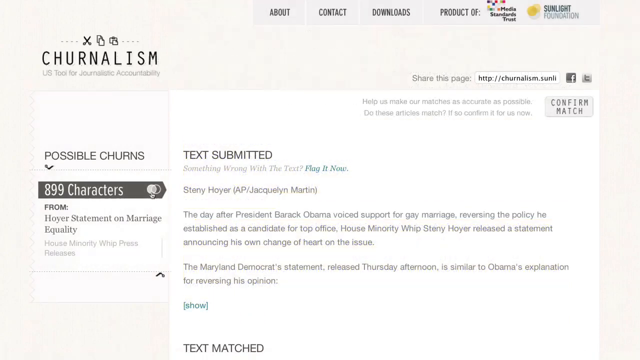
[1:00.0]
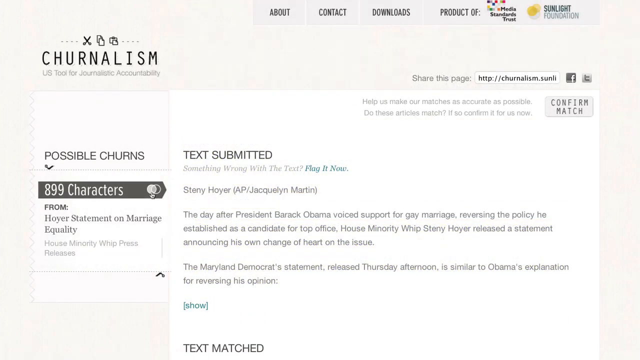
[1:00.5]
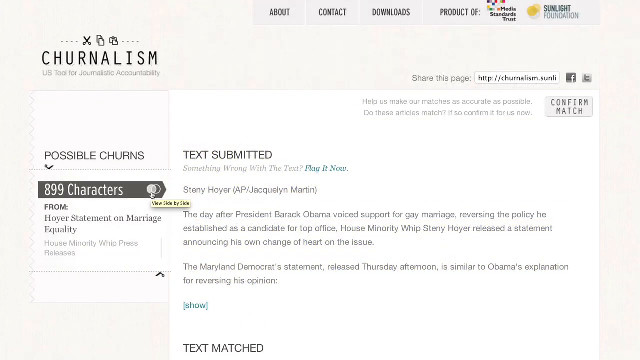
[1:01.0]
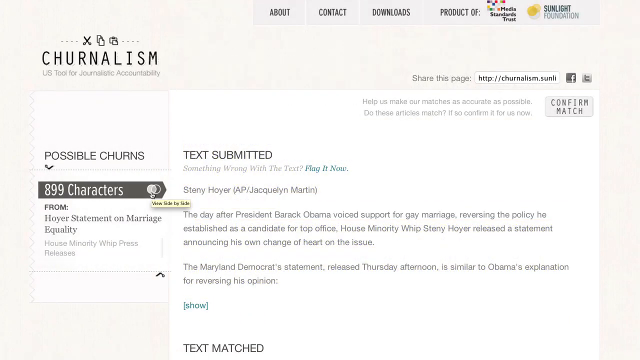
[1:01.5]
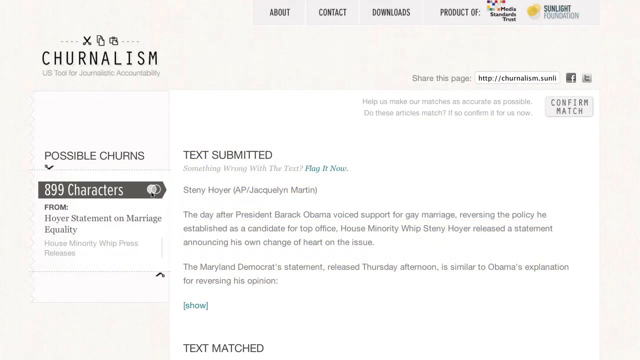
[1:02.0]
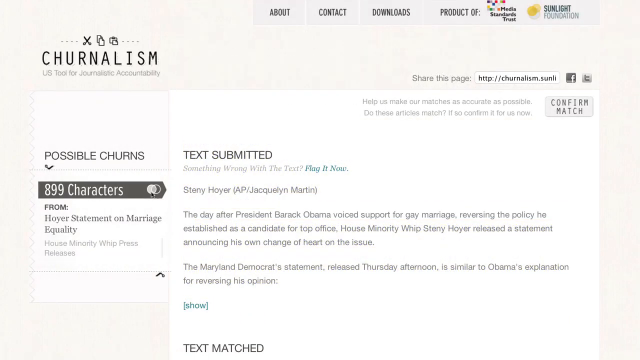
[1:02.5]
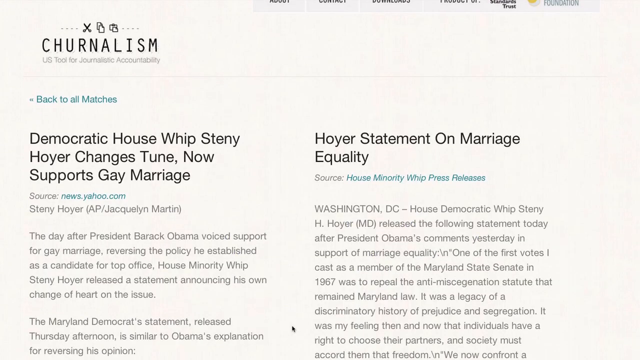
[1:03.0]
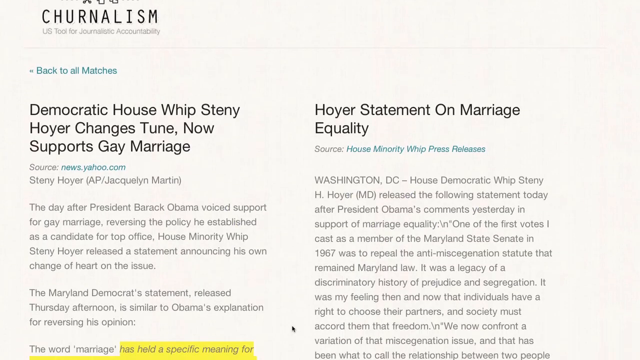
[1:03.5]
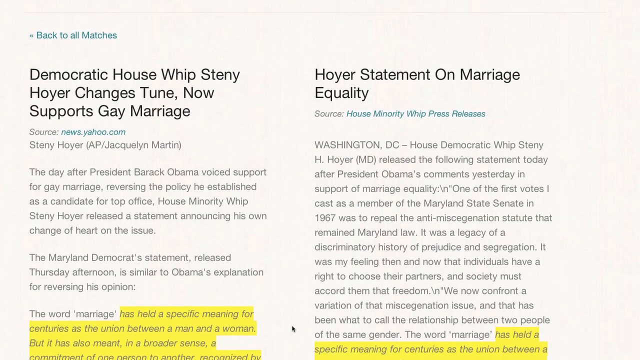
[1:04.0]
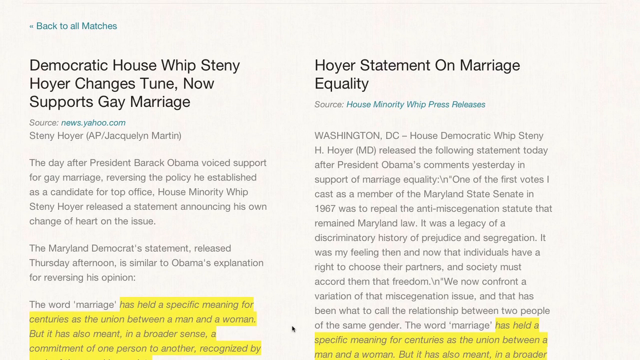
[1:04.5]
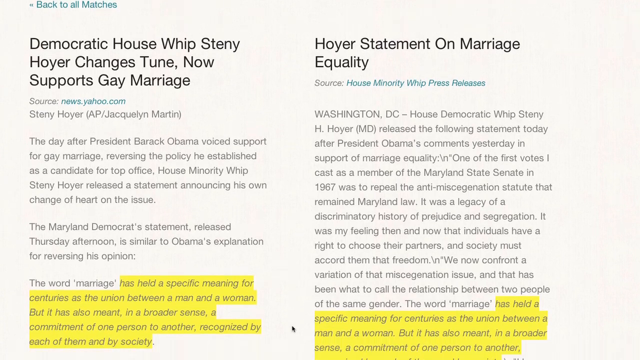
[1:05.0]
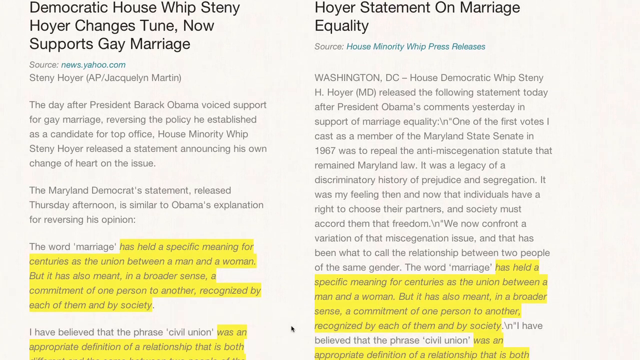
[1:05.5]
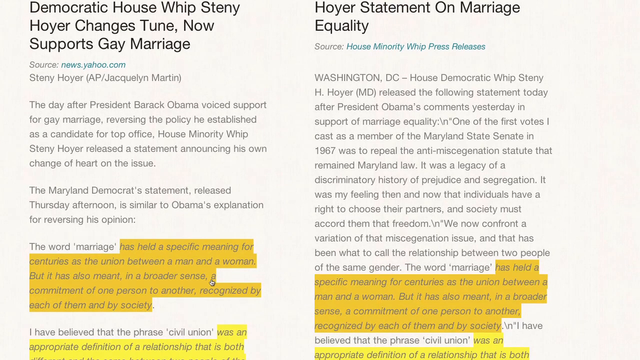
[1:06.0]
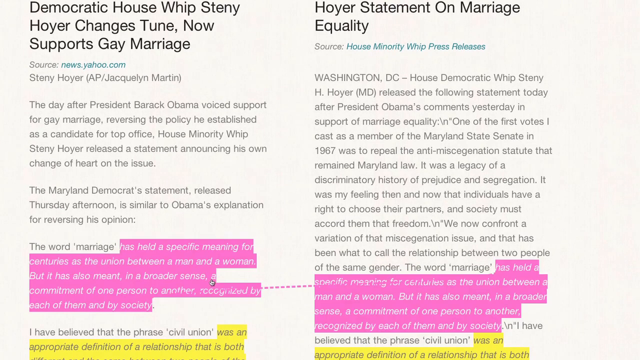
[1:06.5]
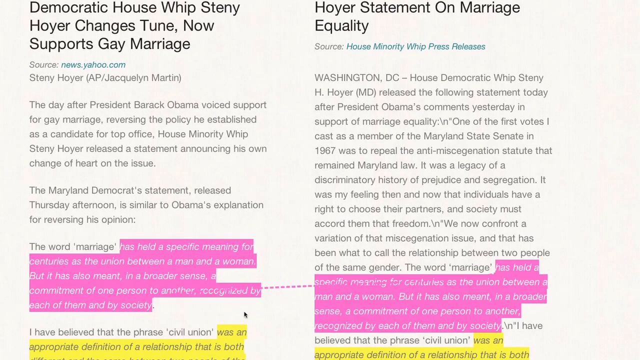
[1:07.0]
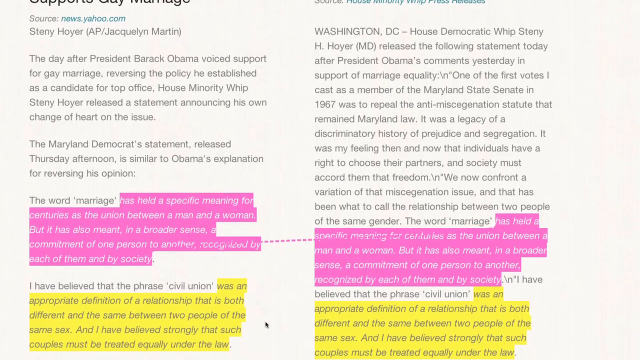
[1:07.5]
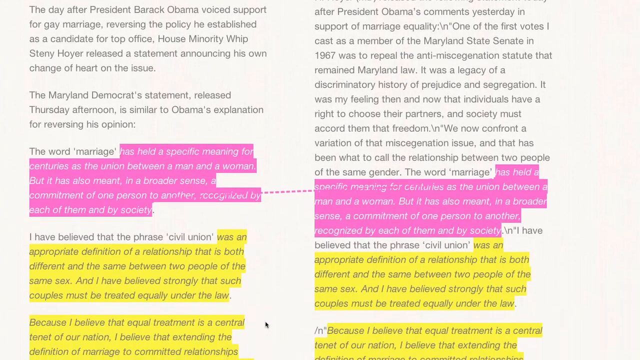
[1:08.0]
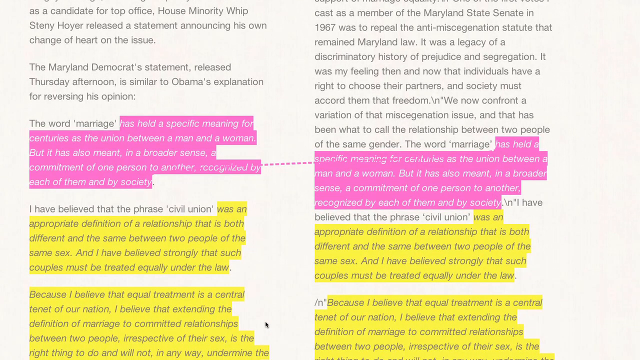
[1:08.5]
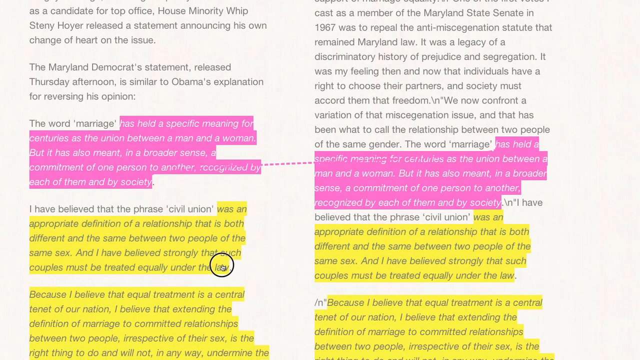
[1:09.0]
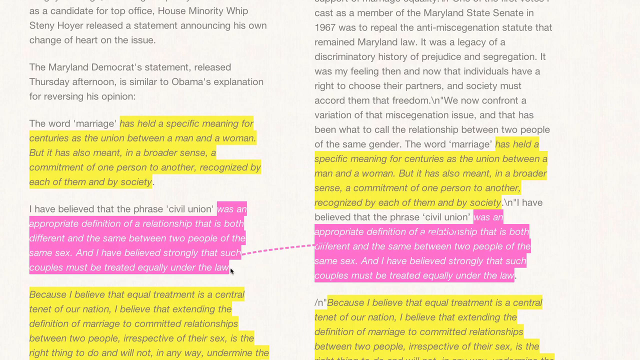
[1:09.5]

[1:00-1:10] The Journalism homepage appears. Up top is a menu bar that says "About," "Contact," "Downloads," "Product Of." There is something that says "Media" and, in small text, apparently "Standard Trust," followed by the Sunlight Foundation name in what looks like its regular logo, with "Journalism" underneath. The main part of the page is the body, which says "Text Submitted," then "Steny Hoyer," and a paragraph that begins "the day after Barack Obama voted support for gay marriage." The view then pans over to another page that is documented and highlights information on gay marriage.